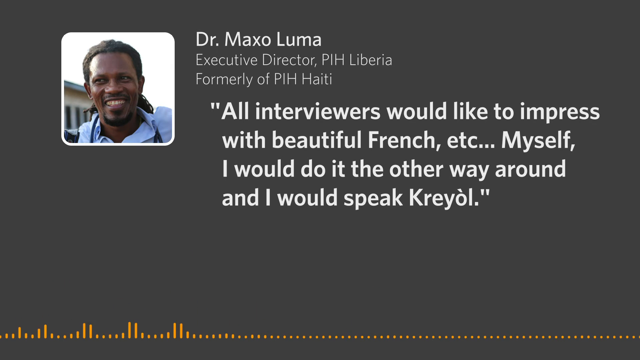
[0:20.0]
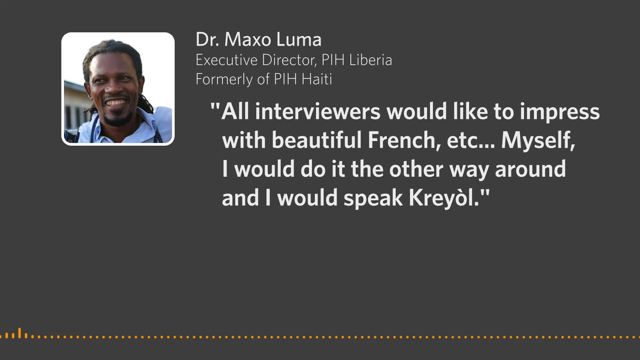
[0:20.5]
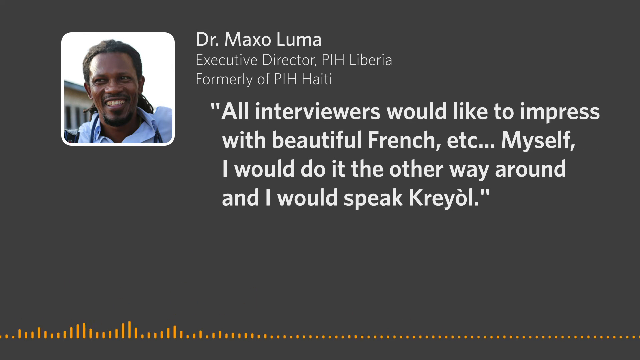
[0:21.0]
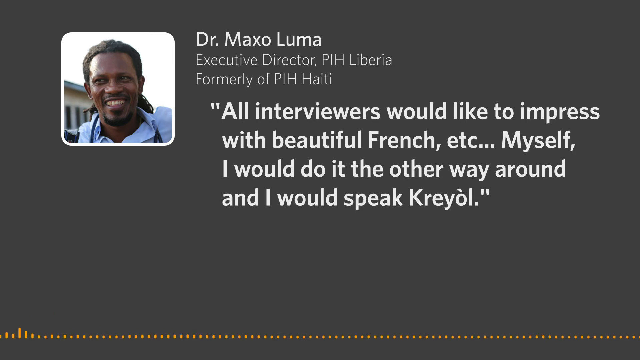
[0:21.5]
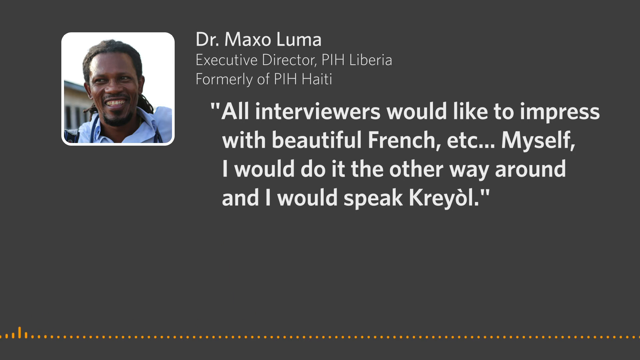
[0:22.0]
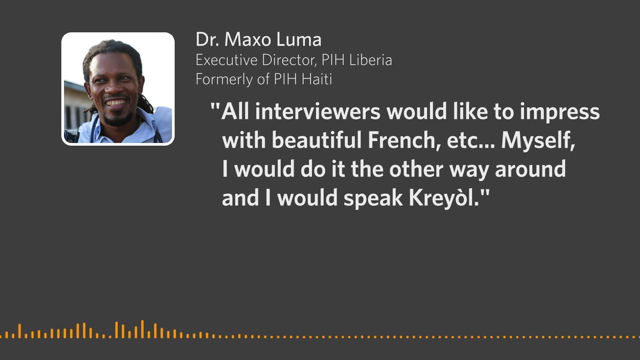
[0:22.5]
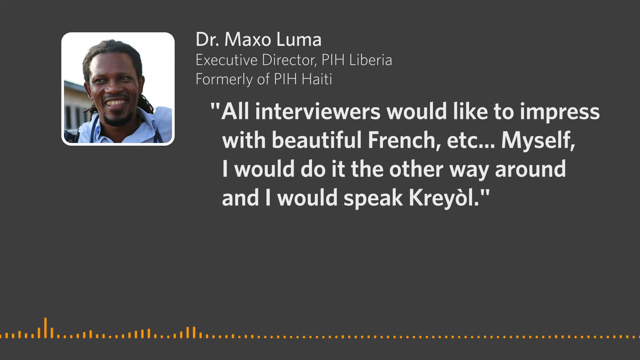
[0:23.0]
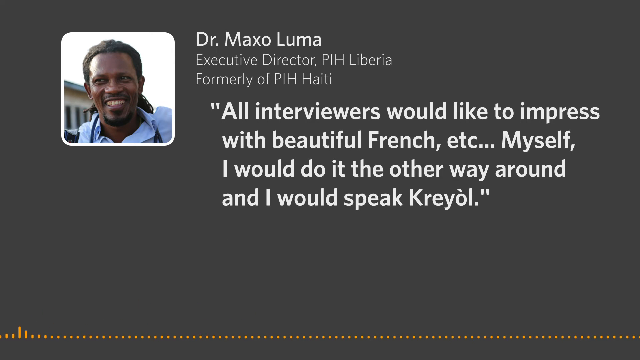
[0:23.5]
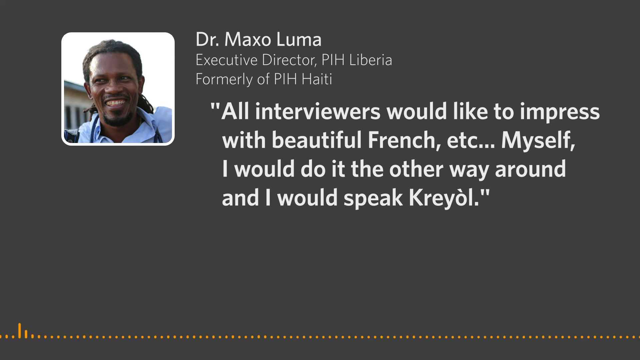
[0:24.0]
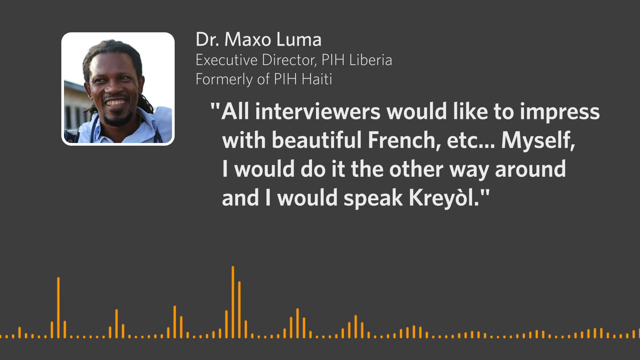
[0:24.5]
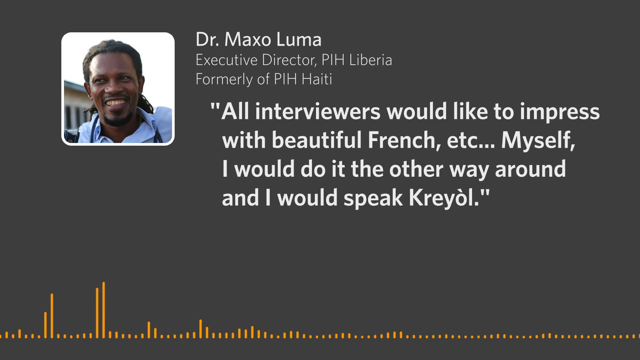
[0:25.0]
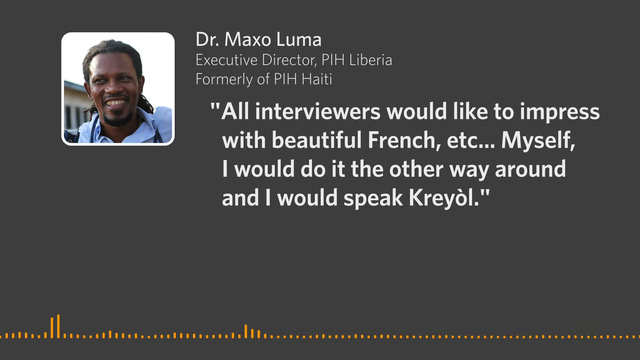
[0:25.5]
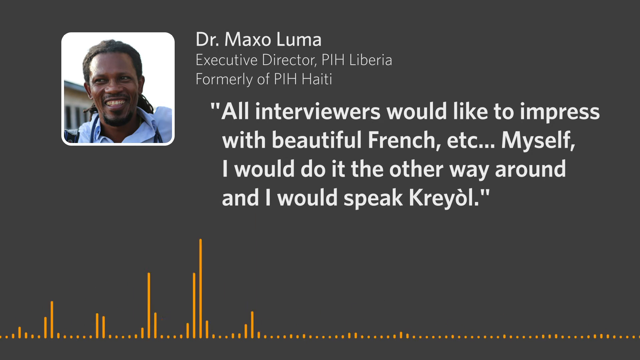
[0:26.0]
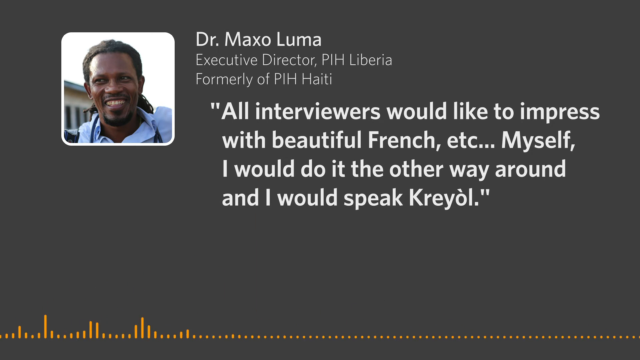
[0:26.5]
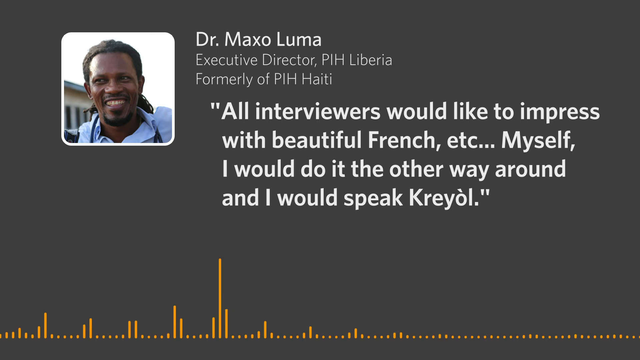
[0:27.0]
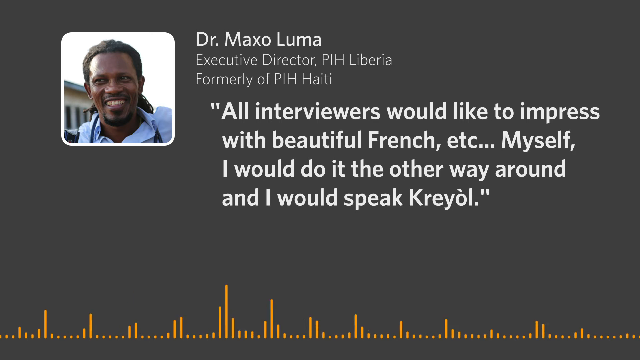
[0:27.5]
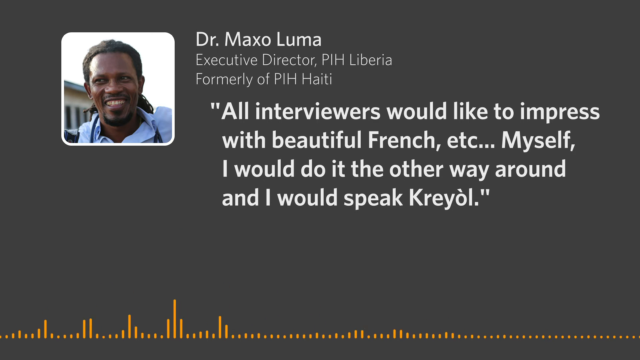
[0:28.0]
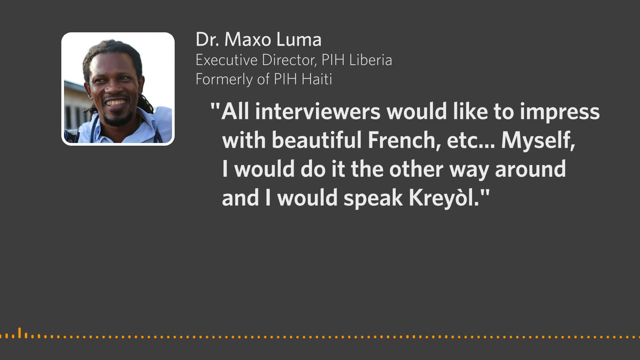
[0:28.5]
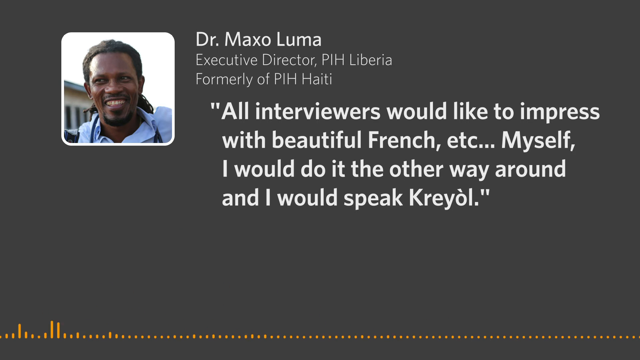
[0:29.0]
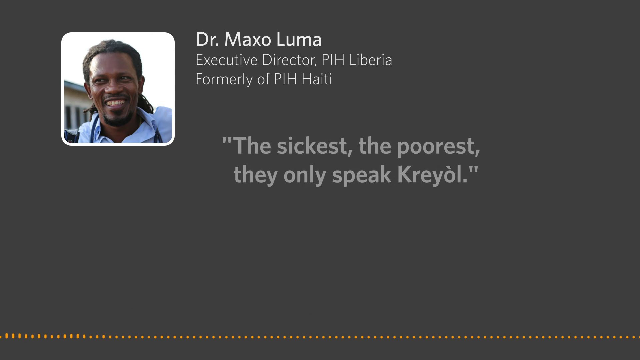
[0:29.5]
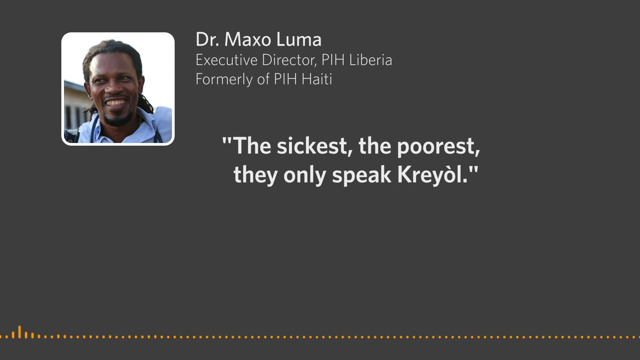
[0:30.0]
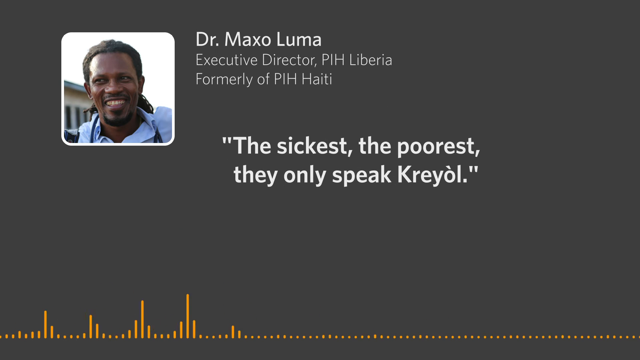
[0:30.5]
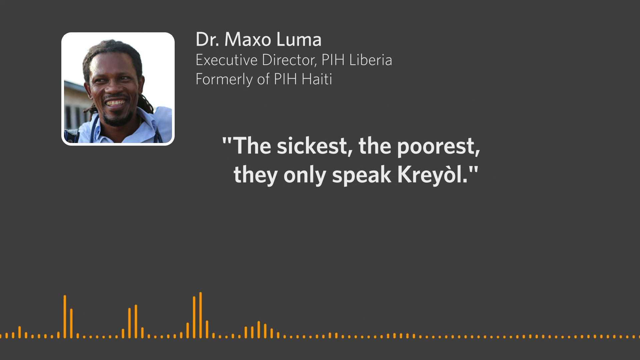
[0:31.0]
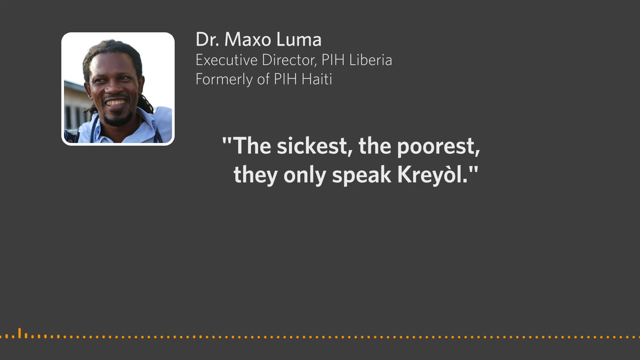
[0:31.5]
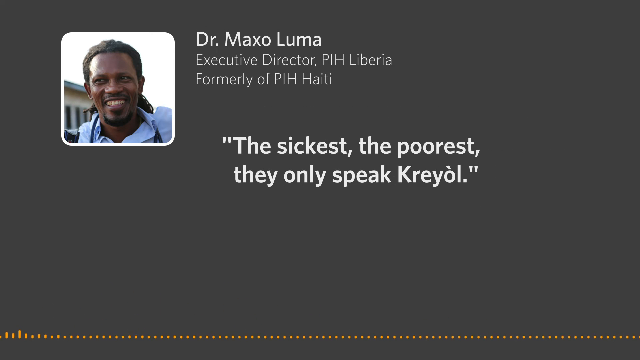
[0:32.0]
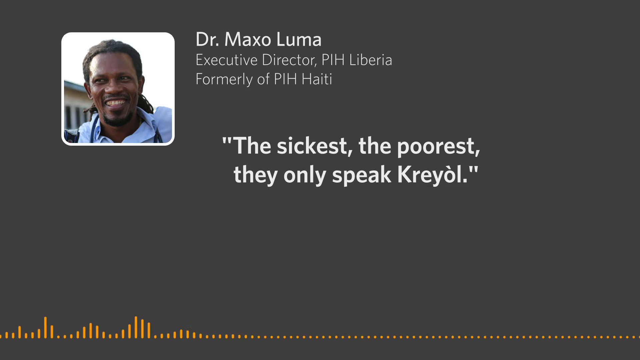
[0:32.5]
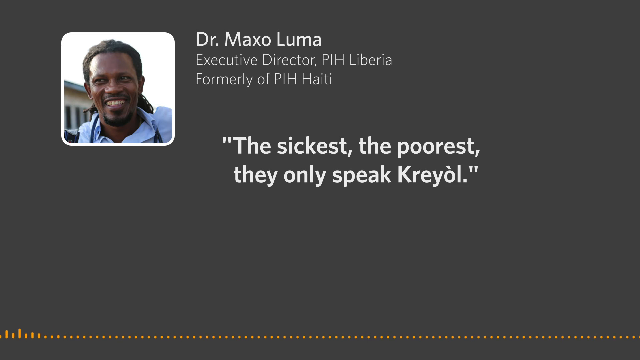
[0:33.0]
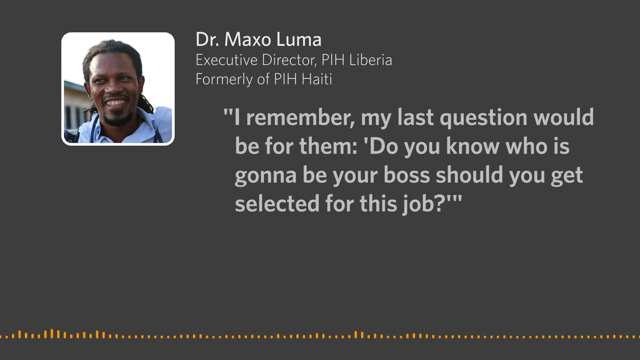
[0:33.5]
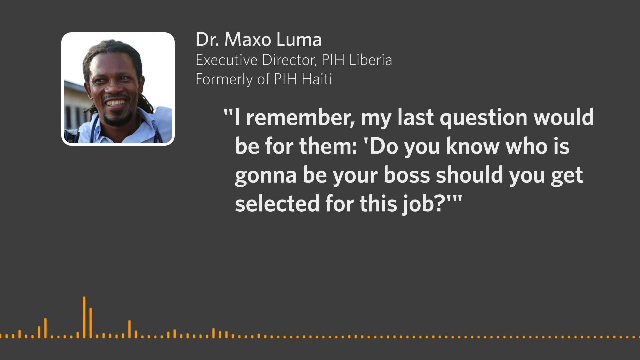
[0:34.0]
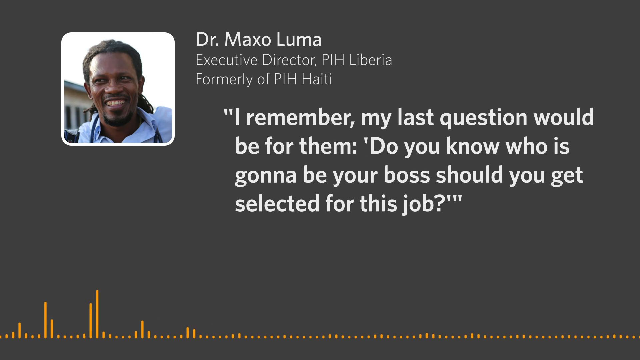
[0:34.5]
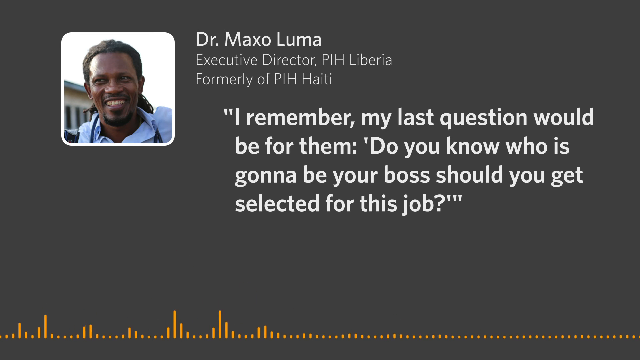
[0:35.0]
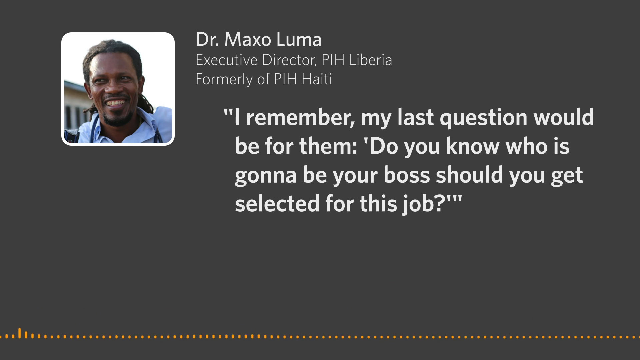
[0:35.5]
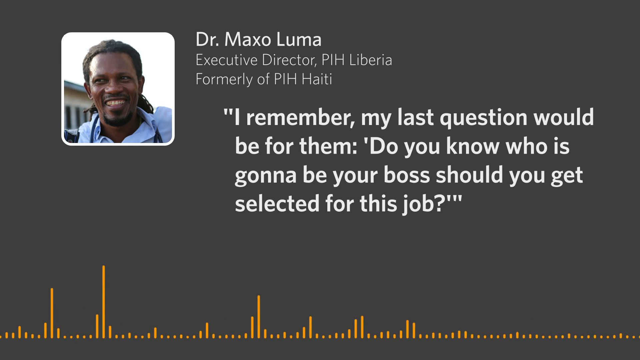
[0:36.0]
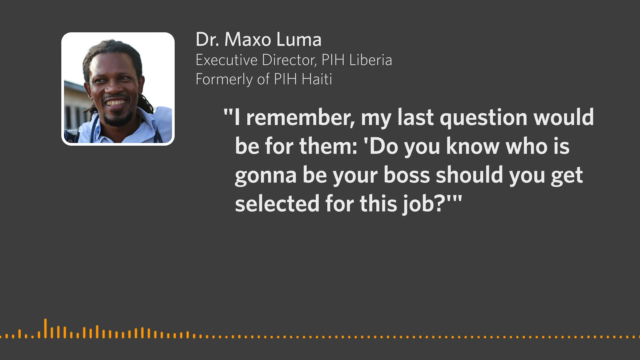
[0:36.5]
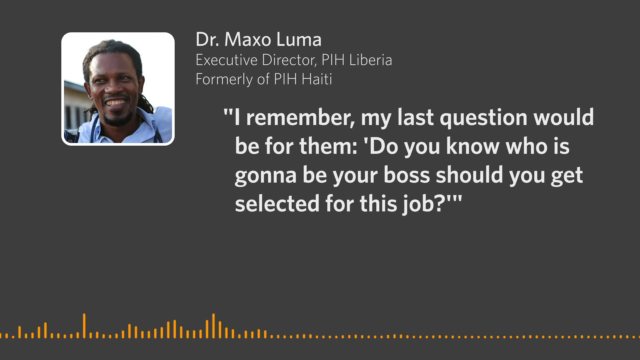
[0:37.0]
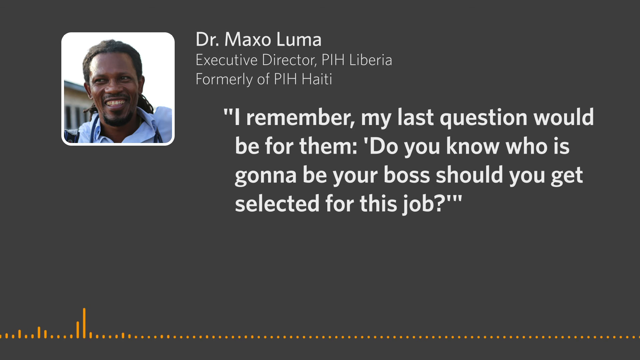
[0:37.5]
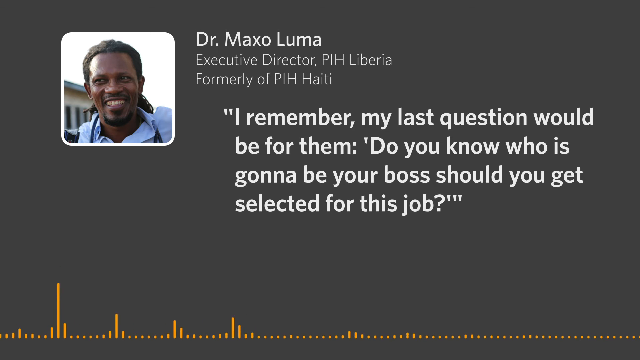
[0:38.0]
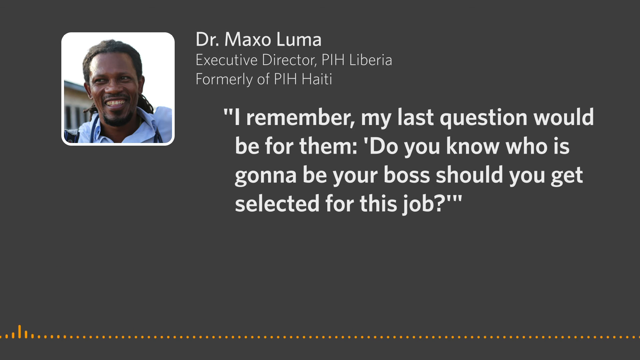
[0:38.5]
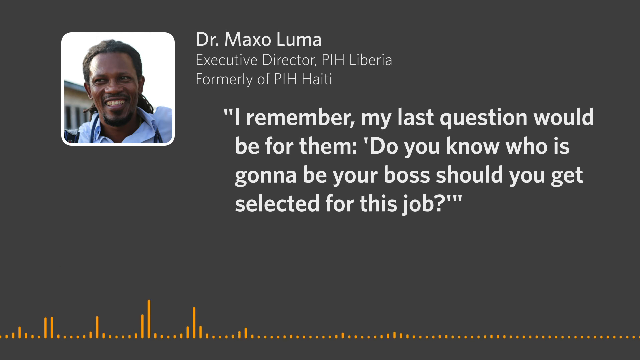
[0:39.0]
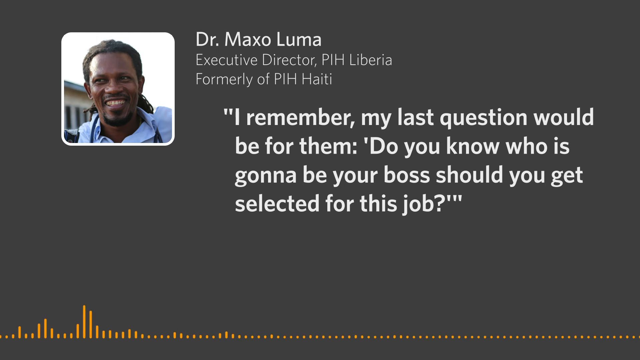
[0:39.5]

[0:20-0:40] The image of the interviewee remains in the top left corner, with his name and details to its right. In the middle of the screen is the caption of what he is saying, and at the far bottom, orange bars move up and down to show the sound waves of the voice recording. The text in the middle reads "The sickest, the poorest, they only speak Kreyol." It then changes to read "I remember my last question would be for them. Do you know who is going to be your boss should you get selected for this job?" As he speaks, the orange bars at the bottom keep moving; they are generally focused to the left, but occasional inflections make them jump up to about half the height of the screen and across the whole length of the bar. The bars are extremely dynamic.